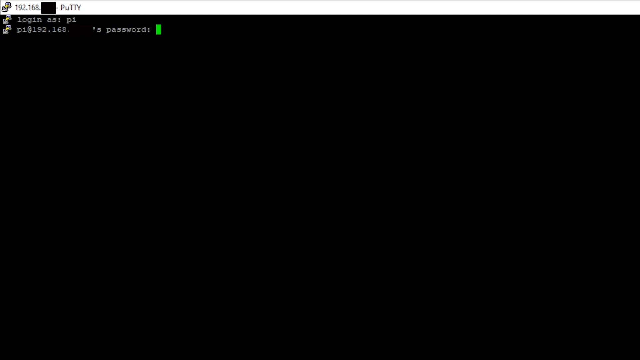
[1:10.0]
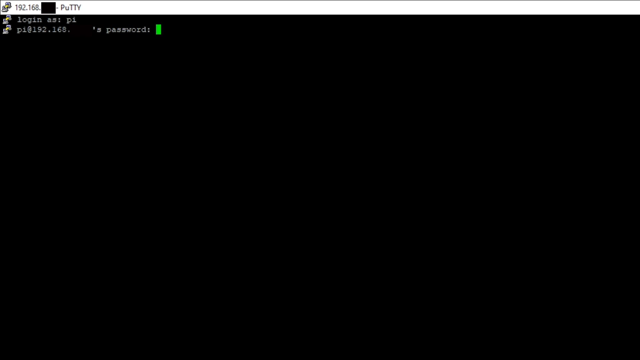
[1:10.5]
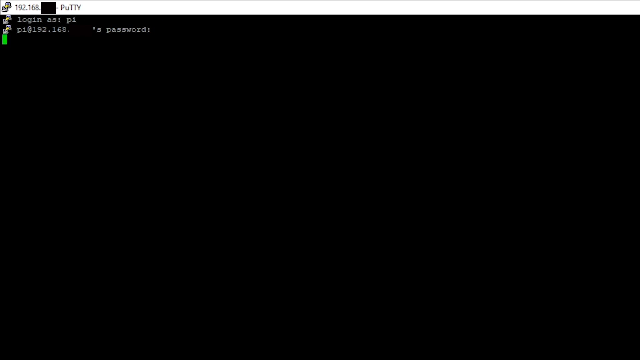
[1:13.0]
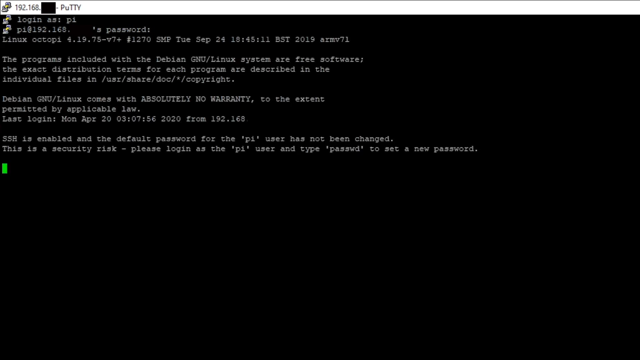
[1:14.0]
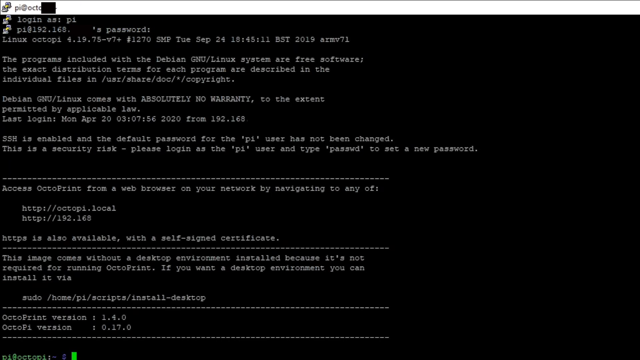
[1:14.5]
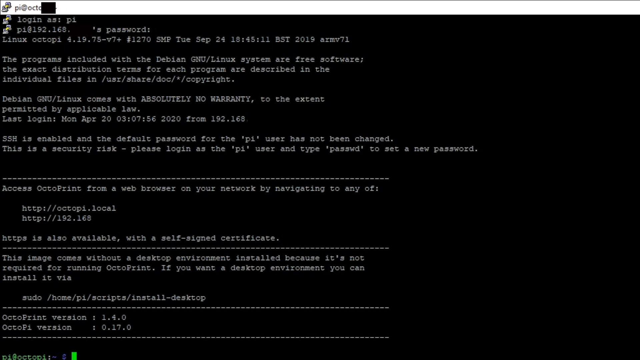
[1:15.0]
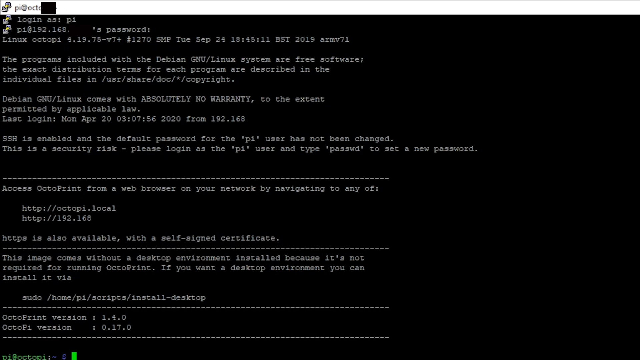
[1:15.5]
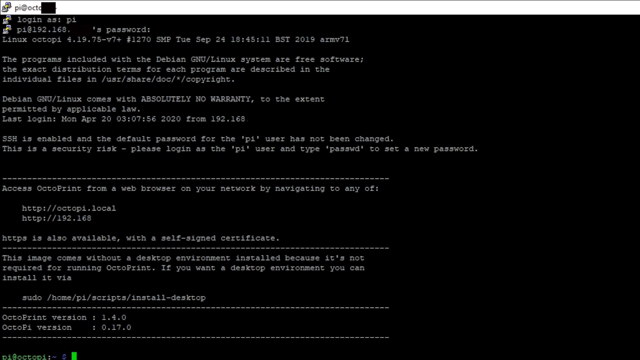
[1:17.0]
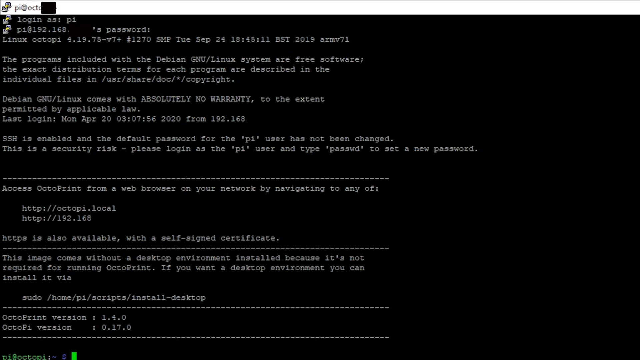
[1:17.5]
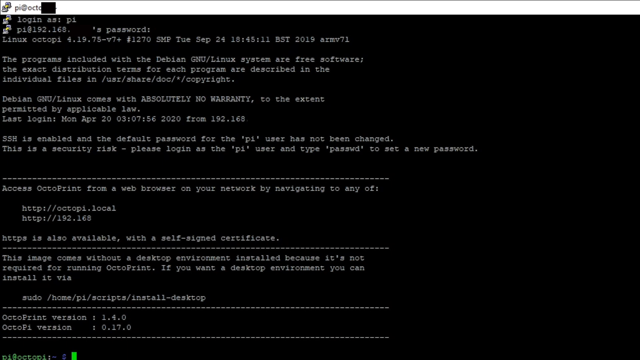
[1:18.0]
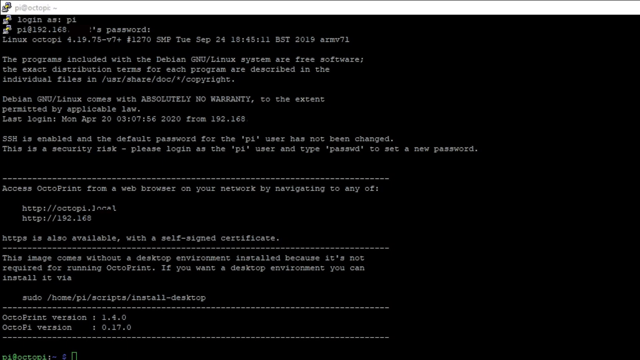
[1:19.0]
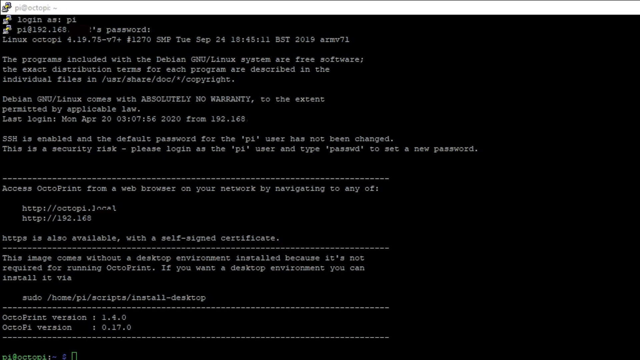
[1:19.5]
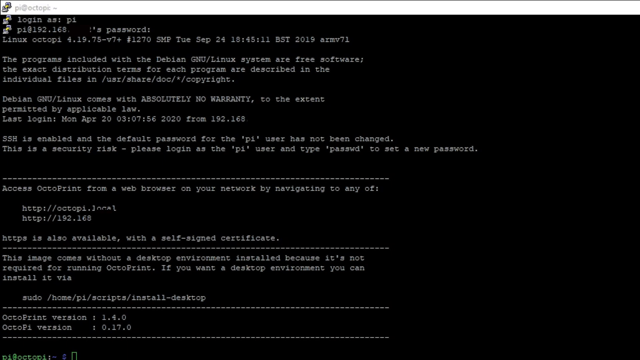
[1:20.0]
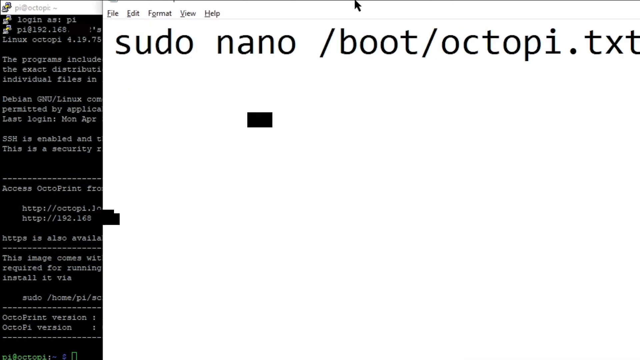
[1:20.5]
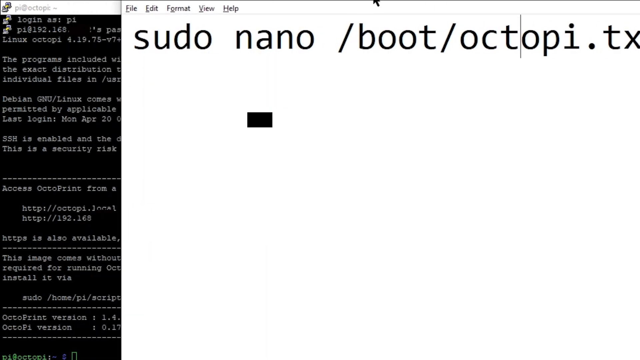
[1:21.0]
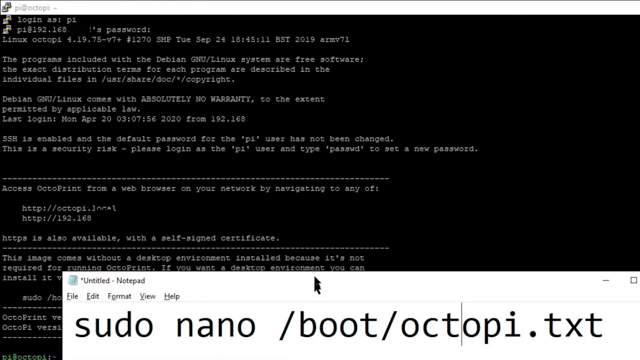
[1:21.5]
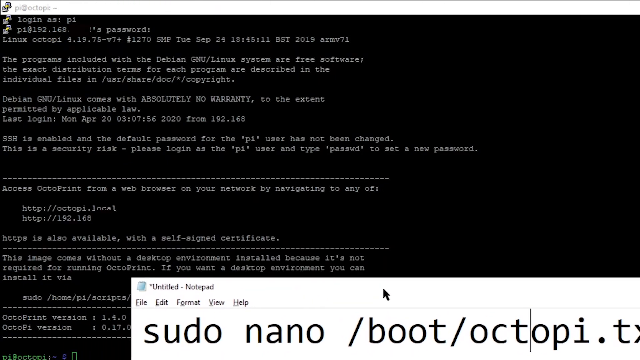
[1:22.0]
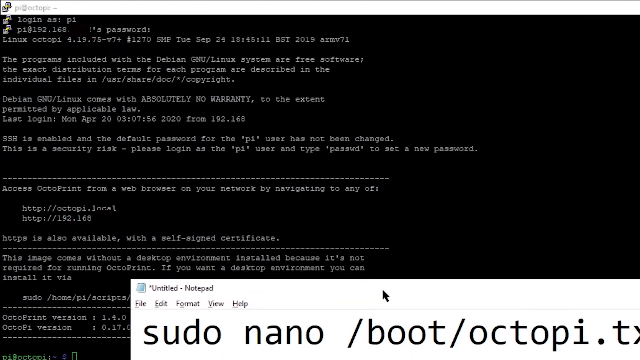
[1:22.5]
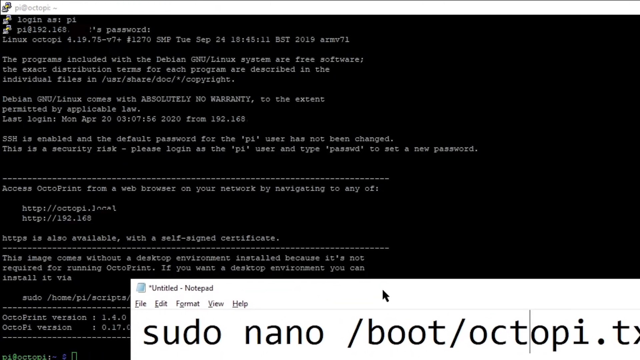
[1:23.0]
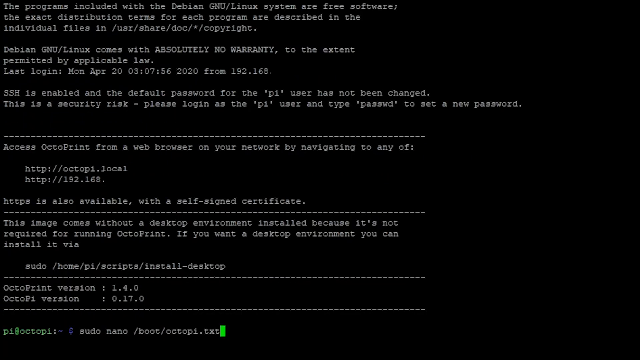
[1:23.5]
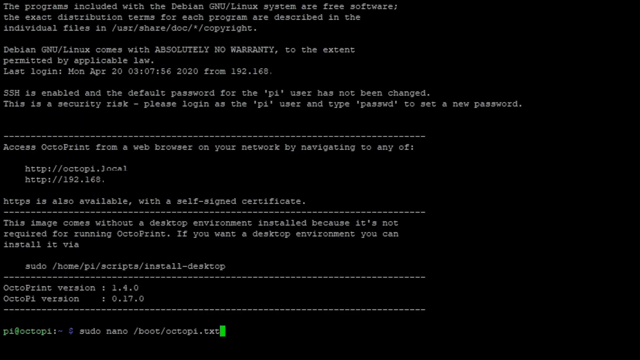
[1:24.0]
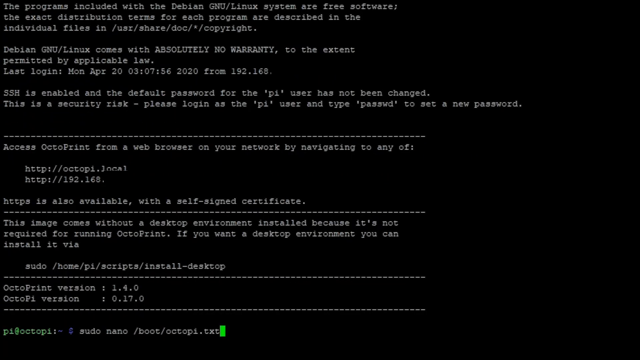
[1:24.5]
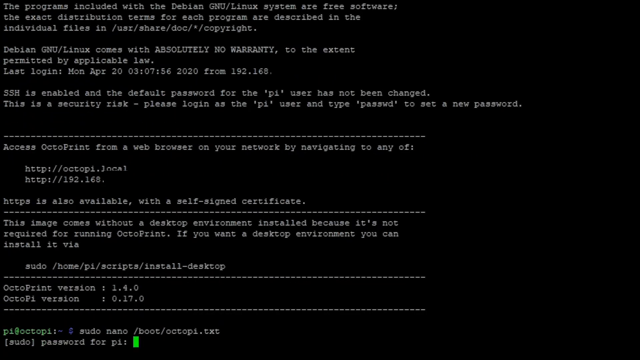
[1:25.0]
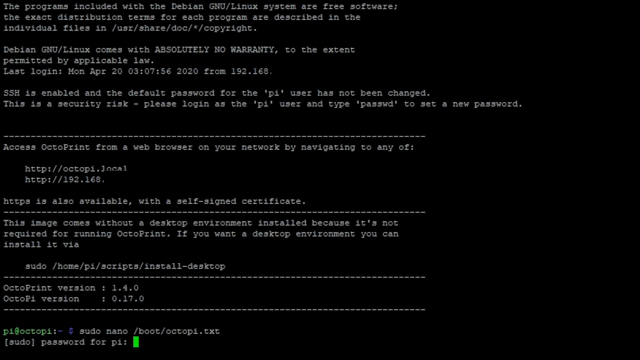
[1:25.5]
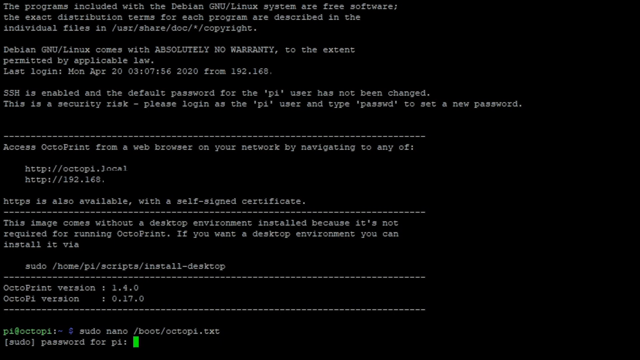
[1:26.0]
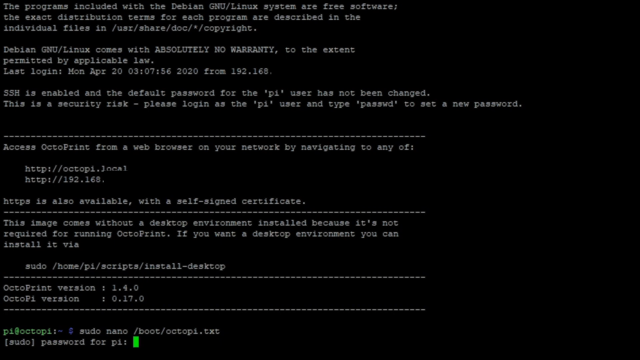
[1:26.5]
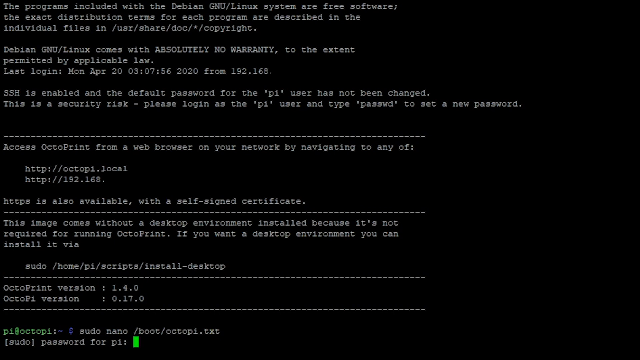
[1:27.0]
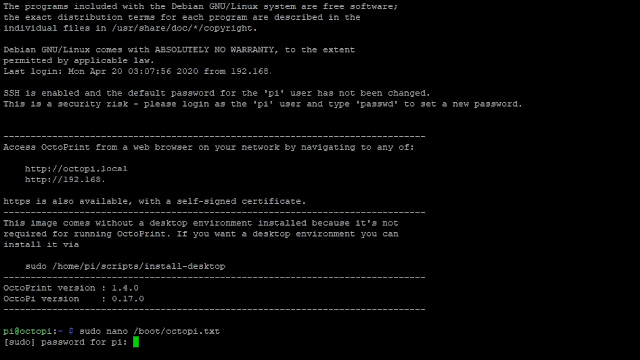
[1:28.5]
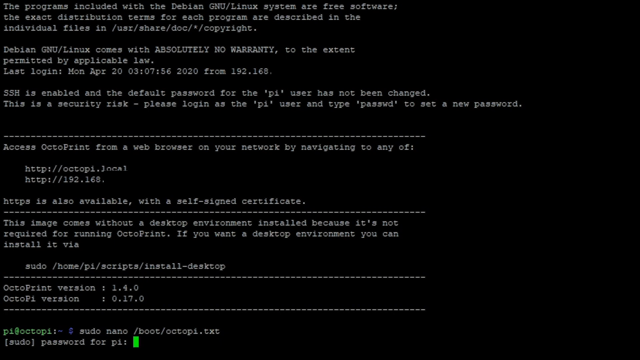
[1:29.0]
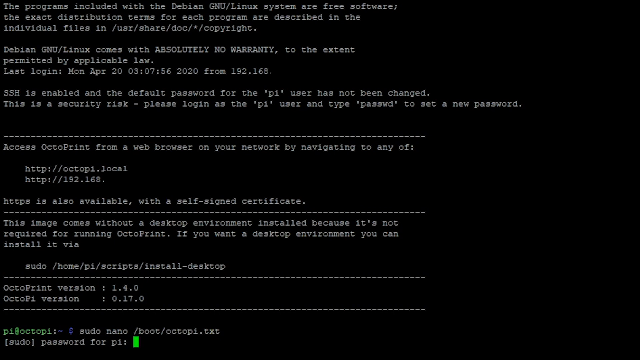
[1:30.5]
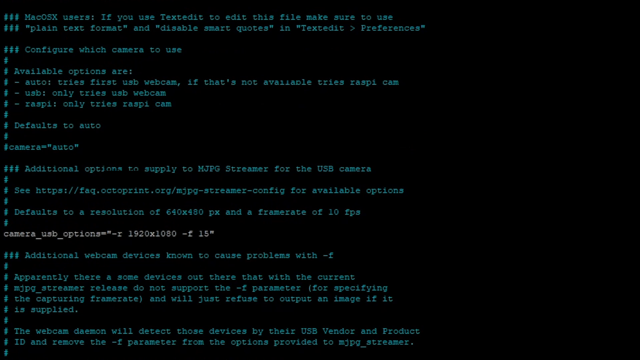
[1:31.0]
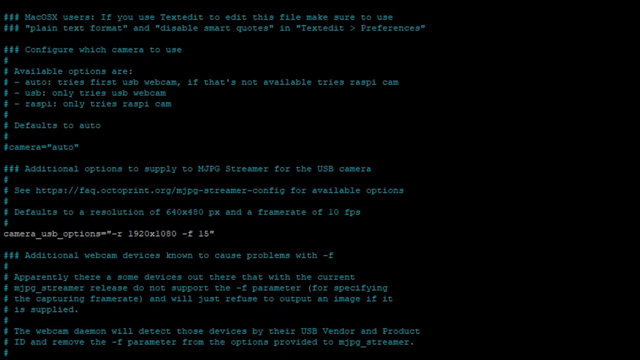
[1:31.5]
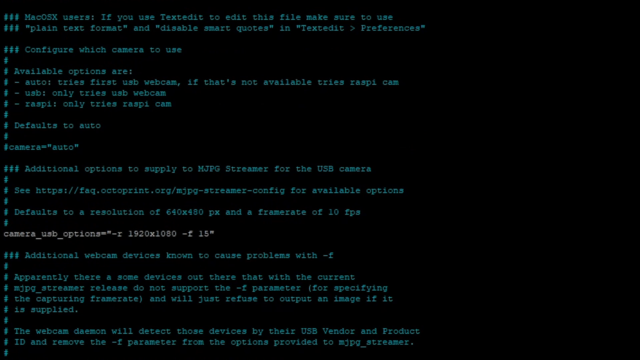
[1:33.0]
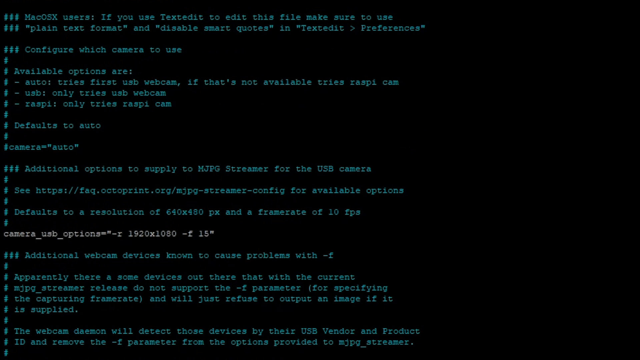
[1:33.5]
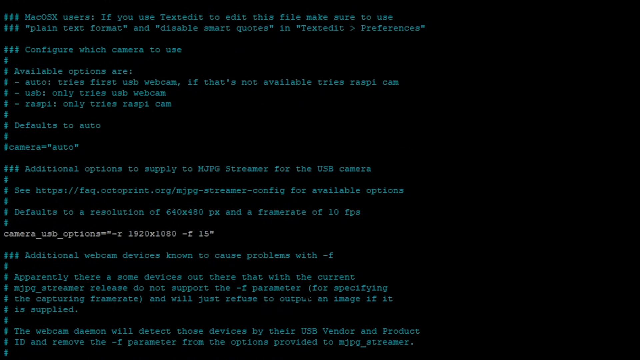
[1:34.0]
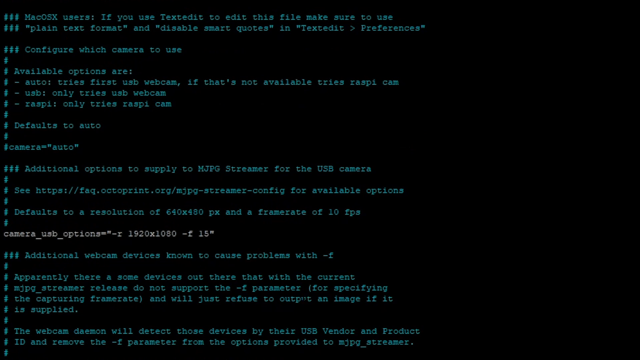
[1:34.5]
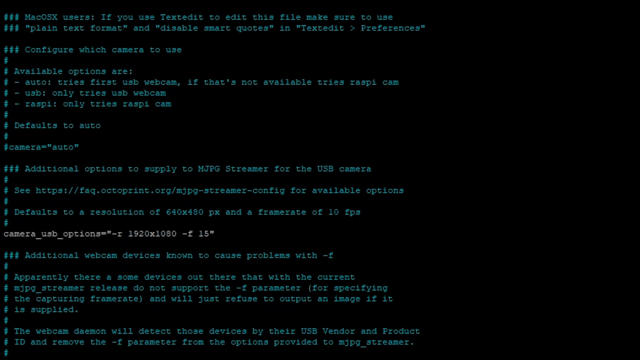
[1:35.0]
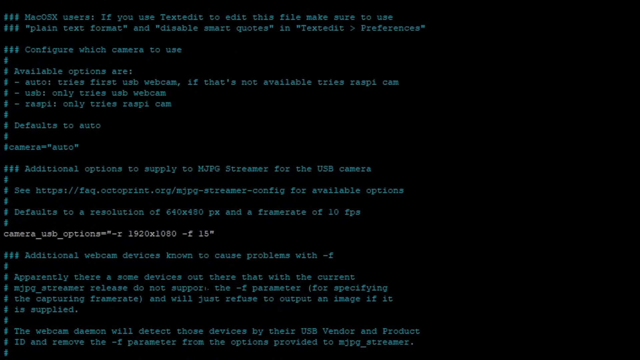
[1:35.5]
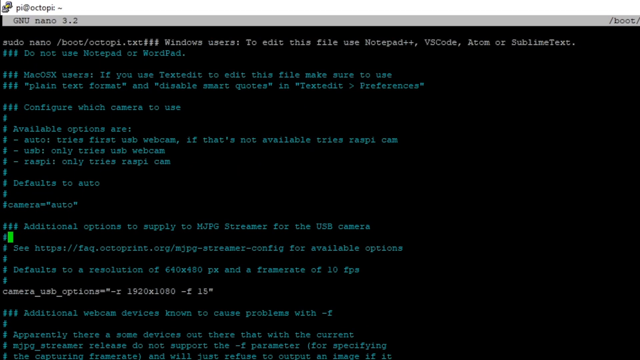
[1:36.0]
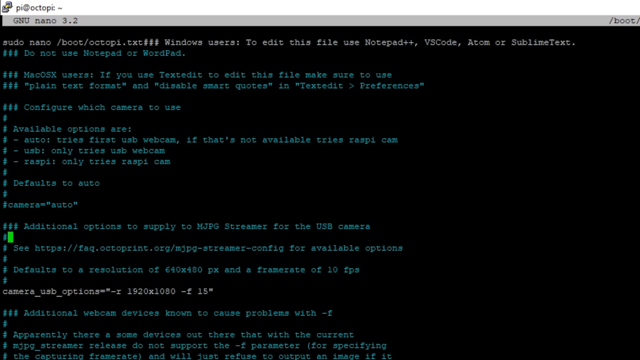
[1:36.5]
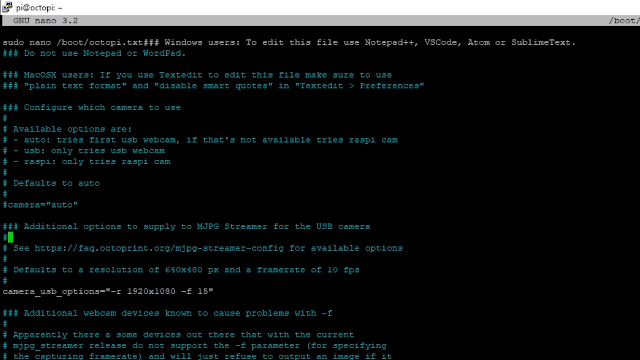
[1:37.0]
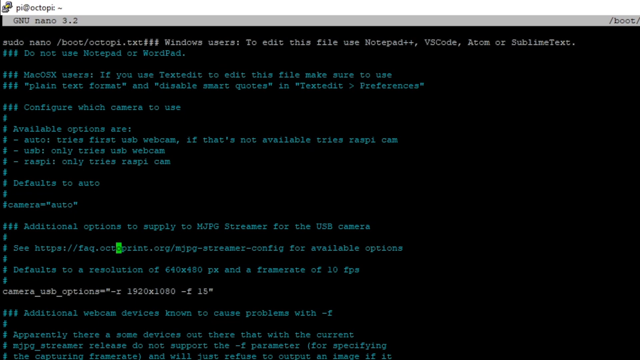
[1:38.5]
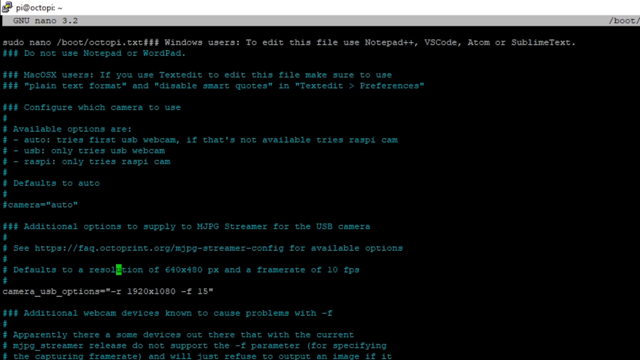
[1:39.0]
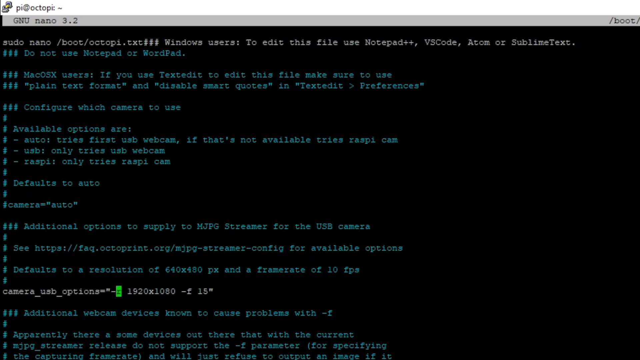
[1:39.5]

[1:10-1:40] The man, who had been saving things and entering entries in a drop-down window, now appears to be on a coding page showing Linux and OctoPi, which might be the program. Text says "the programs included with the GNU/Linux systems are free software". The page is completely black with white writing. He drags over an untitled notepad with a note that says "sudo nano boot/octopi.txt". He then switches to another coding screen with sort of greenish-blue code on it, where a green rectangle cursor moves around and goes to "password" without selecting it yet.